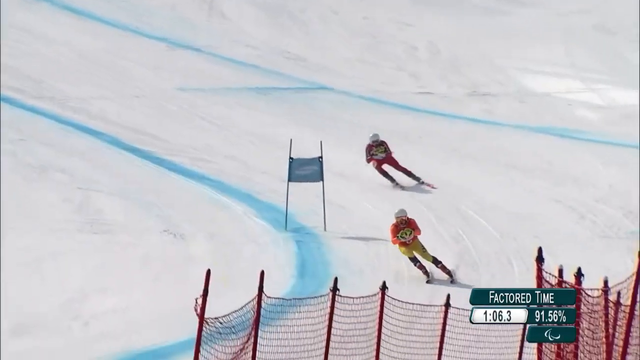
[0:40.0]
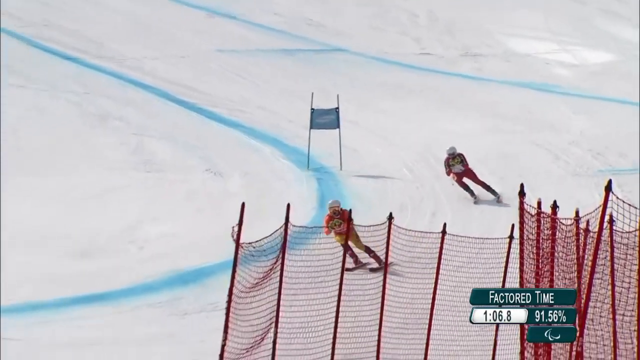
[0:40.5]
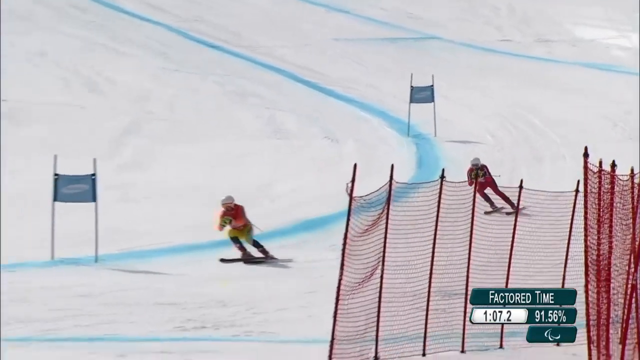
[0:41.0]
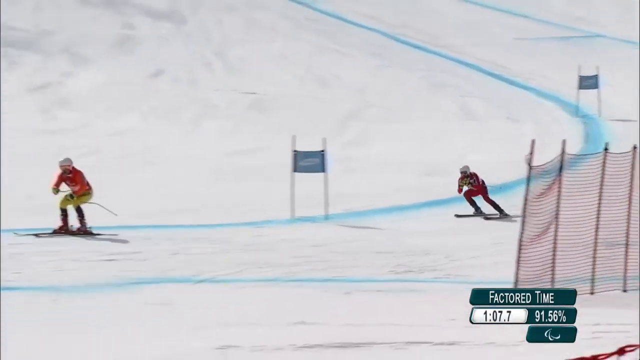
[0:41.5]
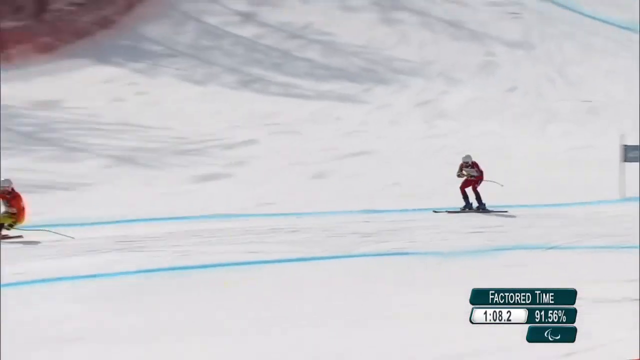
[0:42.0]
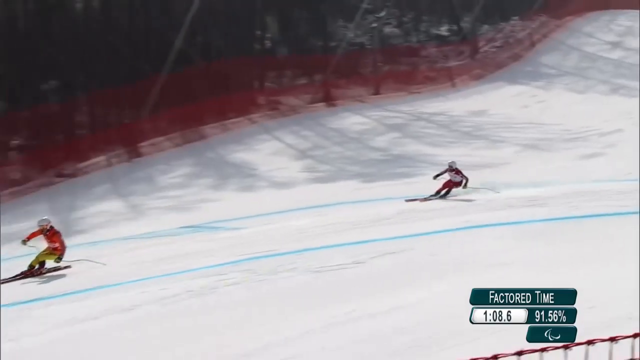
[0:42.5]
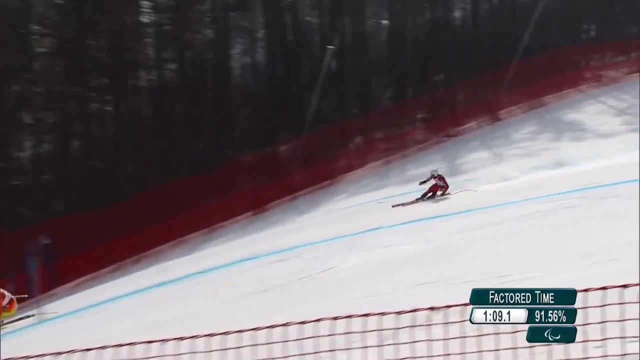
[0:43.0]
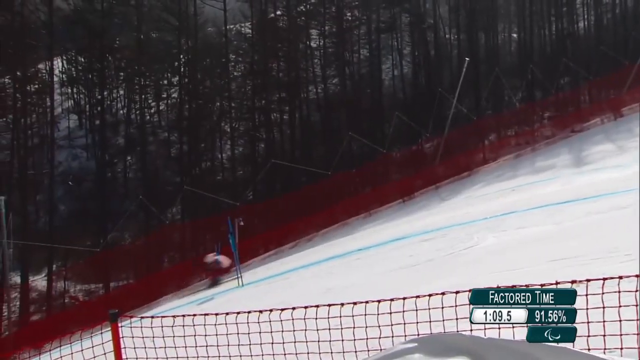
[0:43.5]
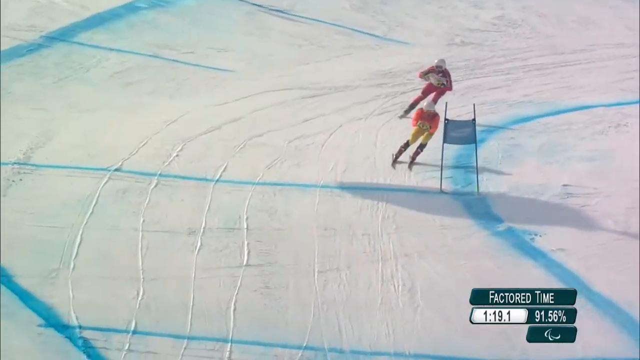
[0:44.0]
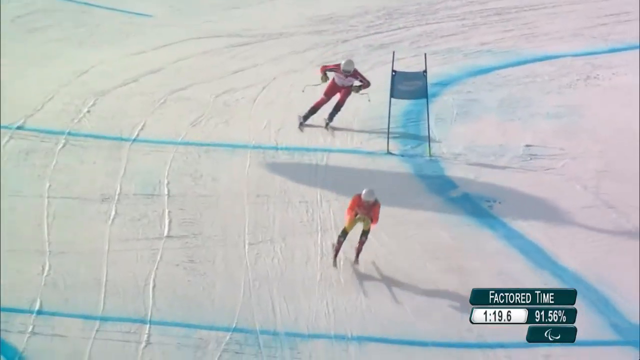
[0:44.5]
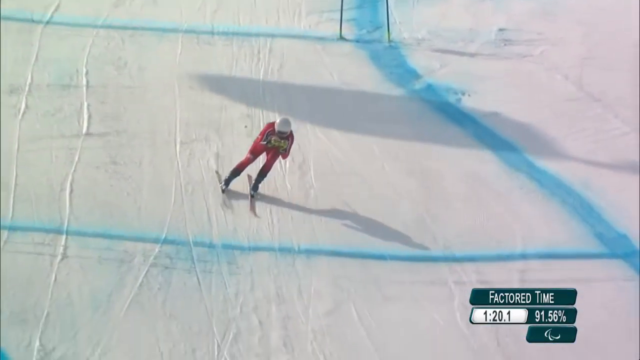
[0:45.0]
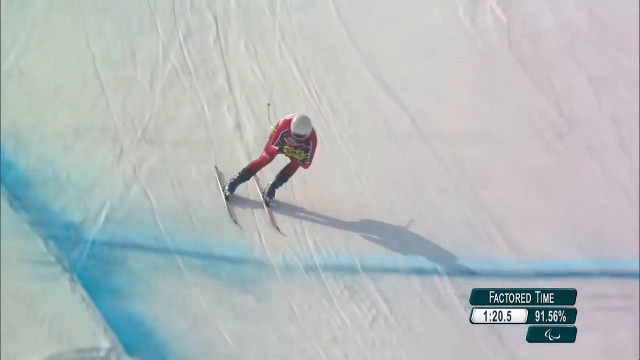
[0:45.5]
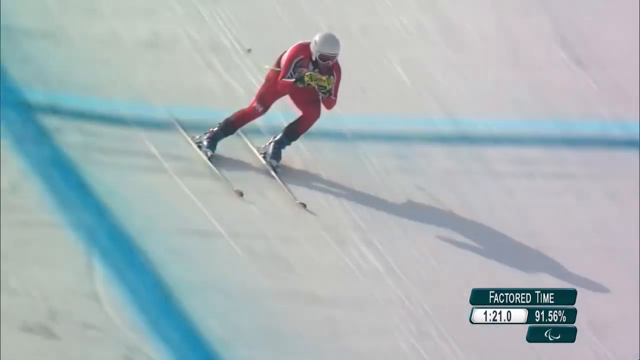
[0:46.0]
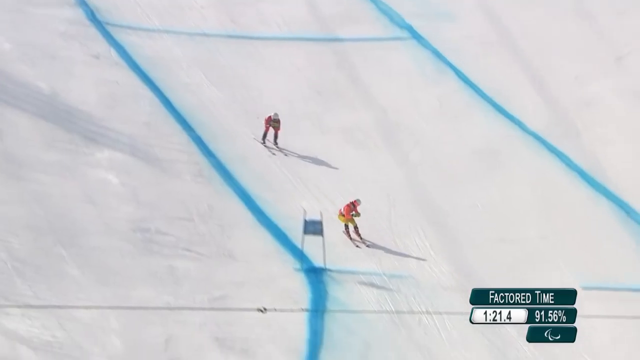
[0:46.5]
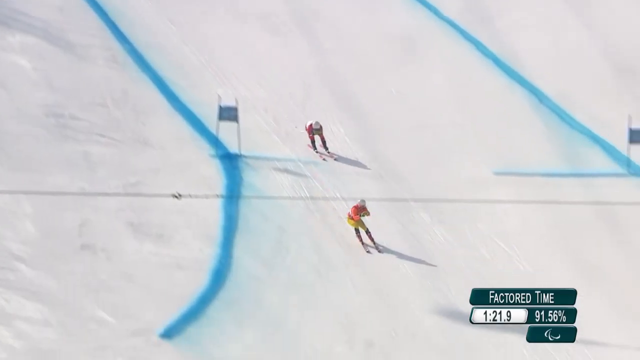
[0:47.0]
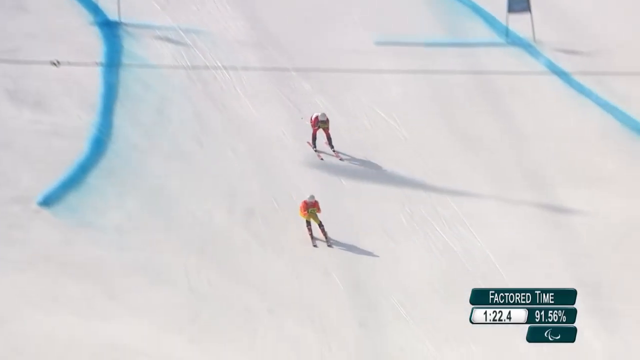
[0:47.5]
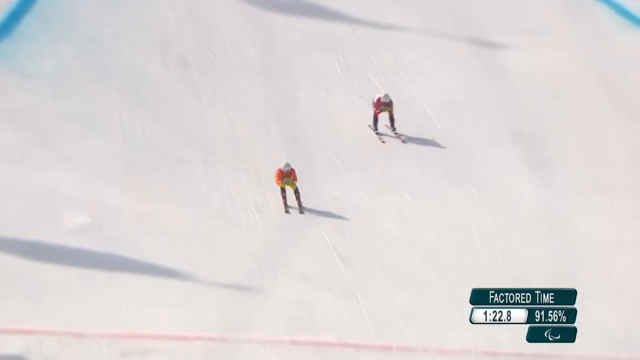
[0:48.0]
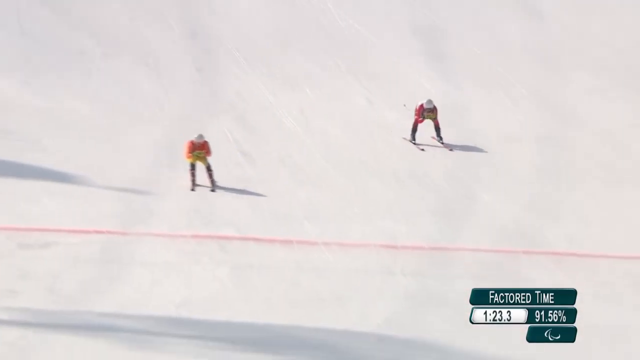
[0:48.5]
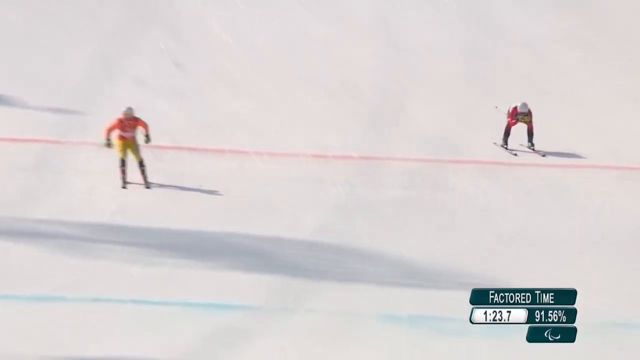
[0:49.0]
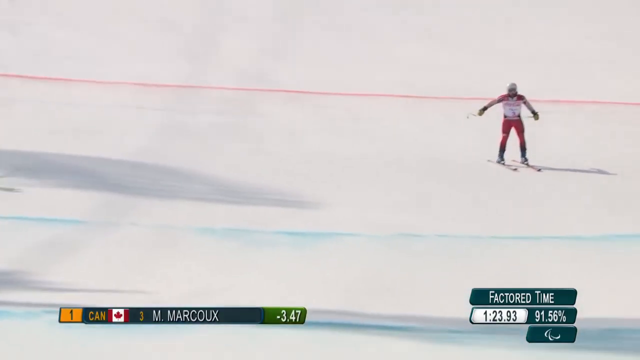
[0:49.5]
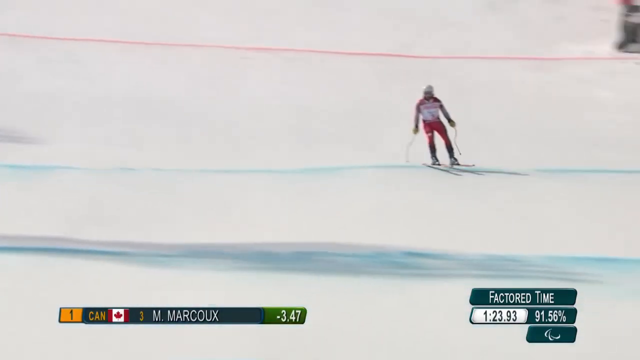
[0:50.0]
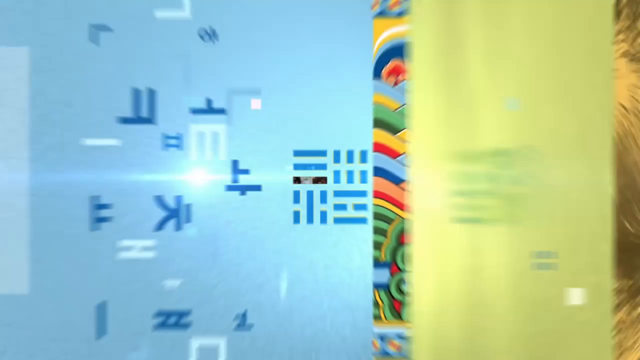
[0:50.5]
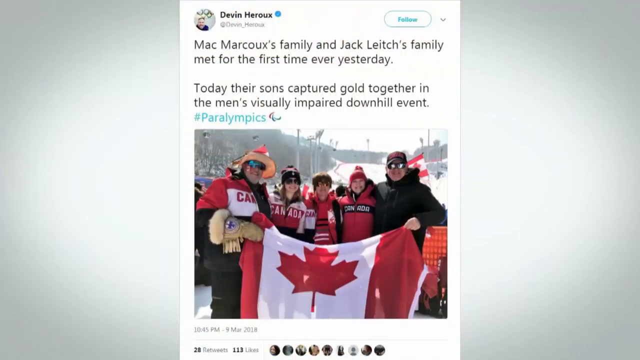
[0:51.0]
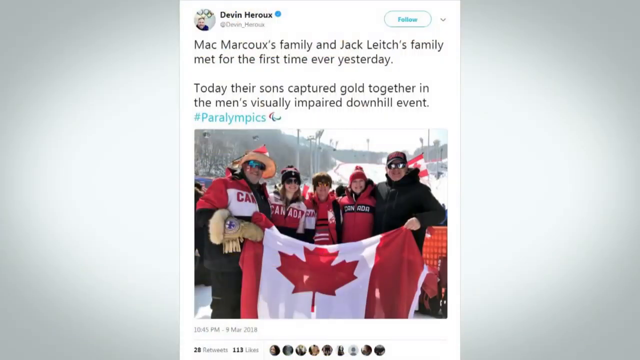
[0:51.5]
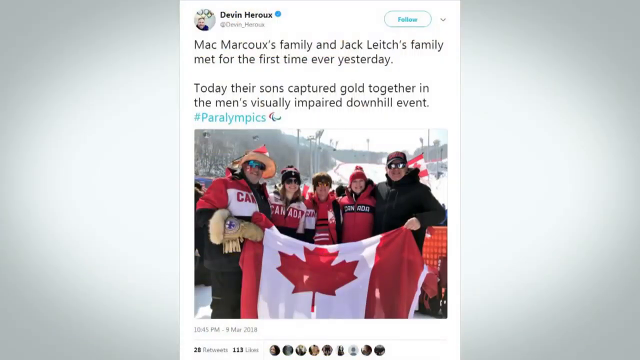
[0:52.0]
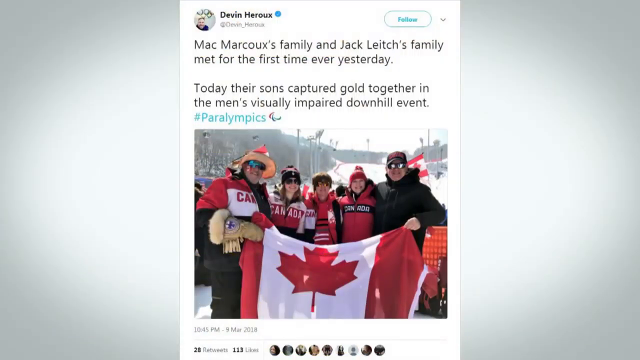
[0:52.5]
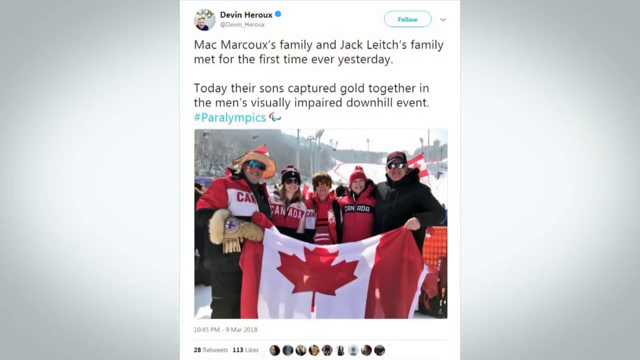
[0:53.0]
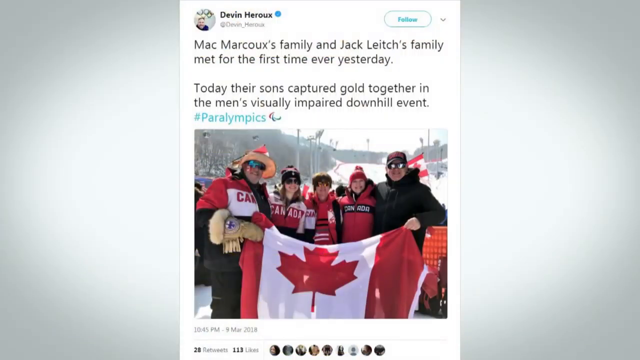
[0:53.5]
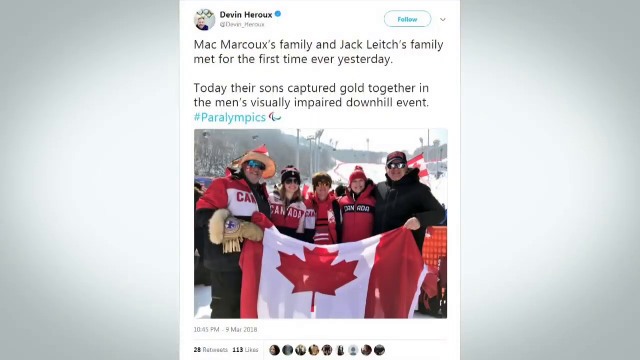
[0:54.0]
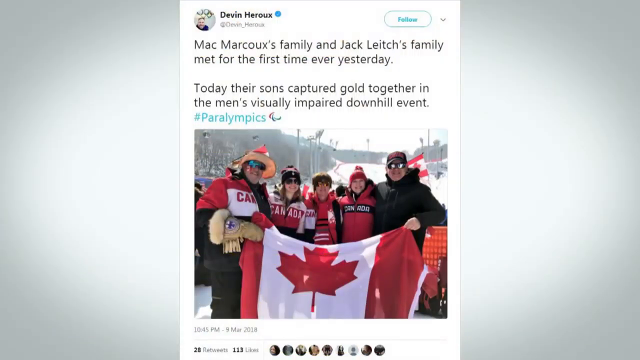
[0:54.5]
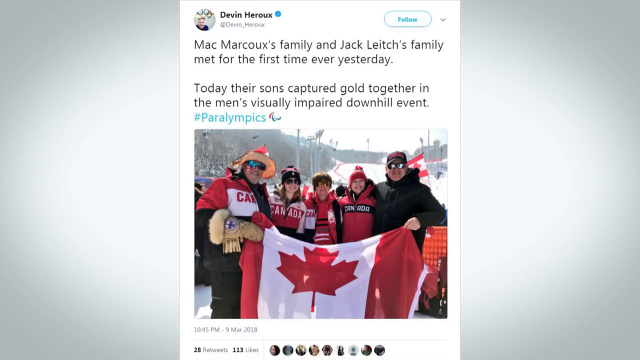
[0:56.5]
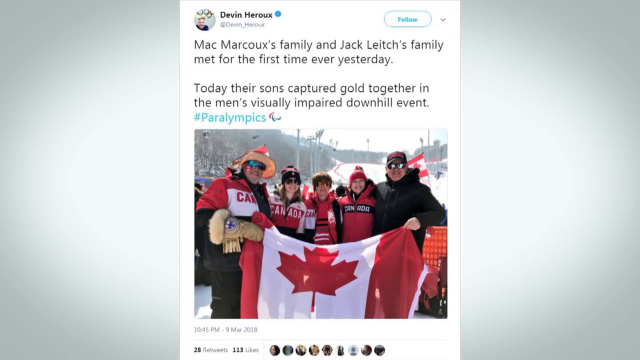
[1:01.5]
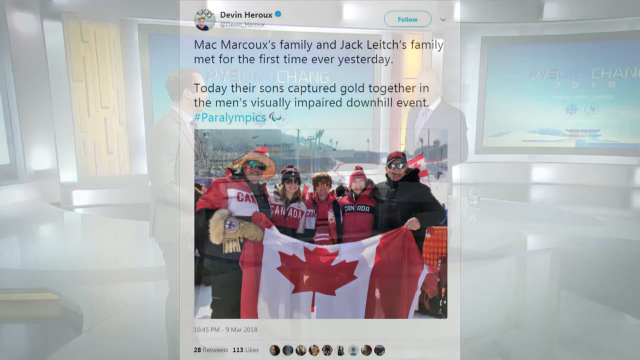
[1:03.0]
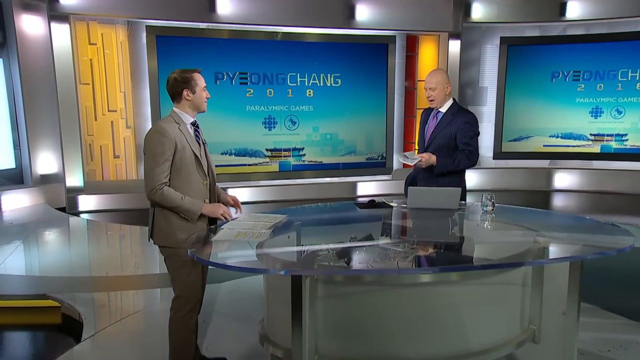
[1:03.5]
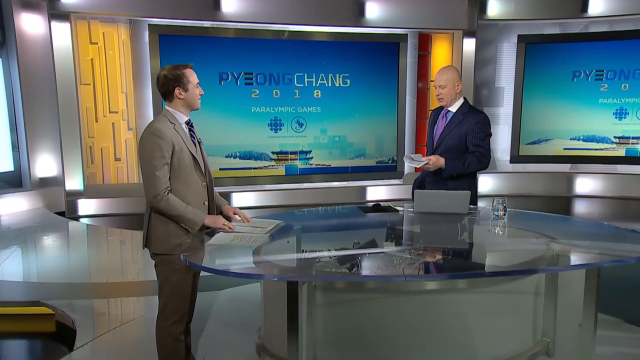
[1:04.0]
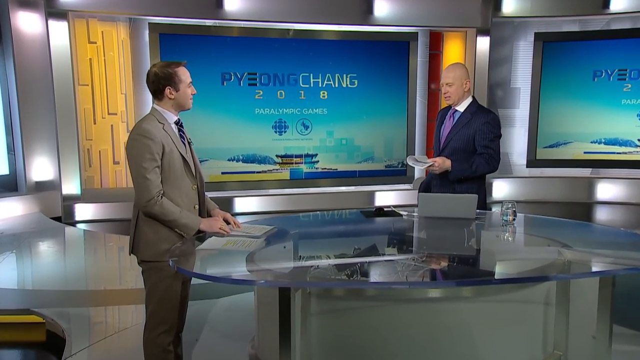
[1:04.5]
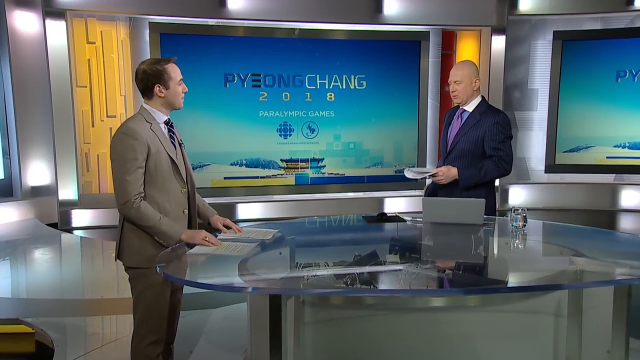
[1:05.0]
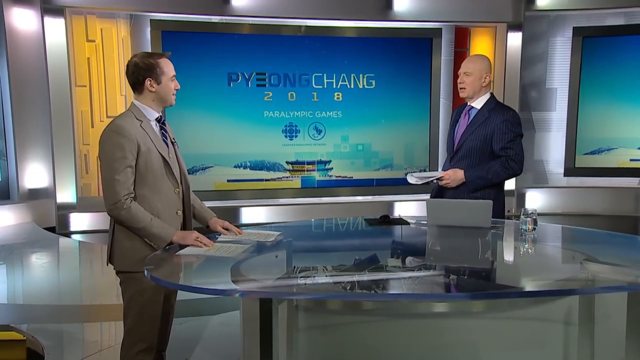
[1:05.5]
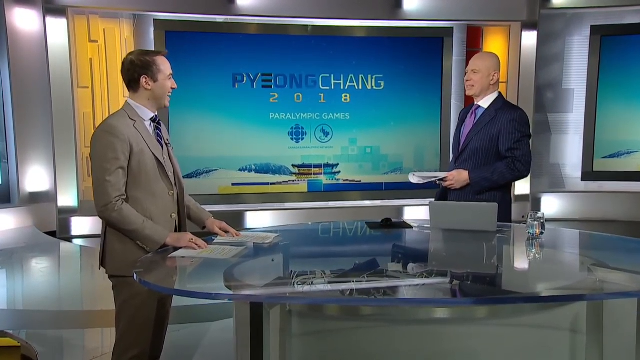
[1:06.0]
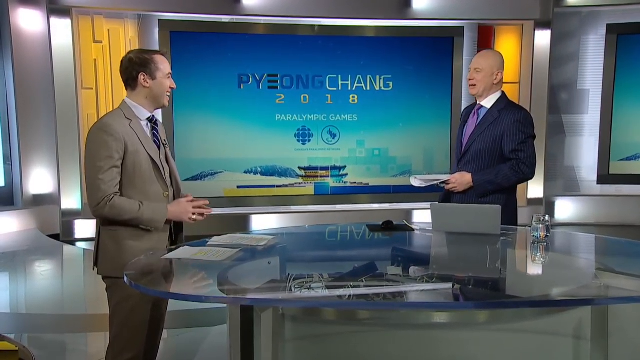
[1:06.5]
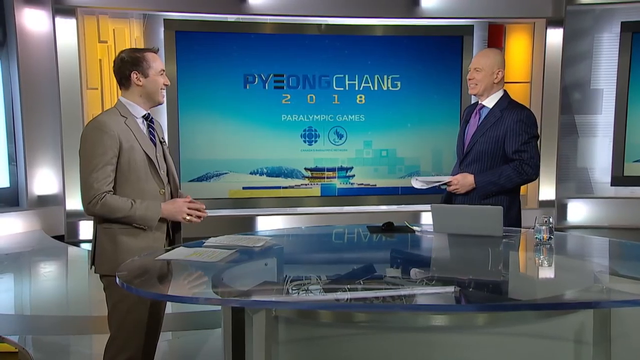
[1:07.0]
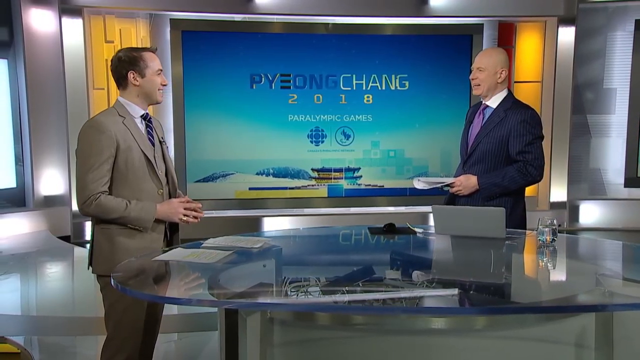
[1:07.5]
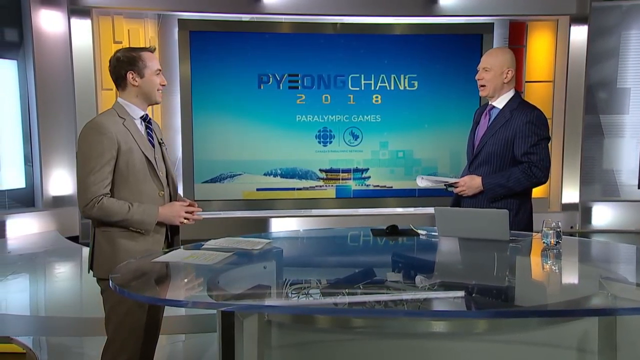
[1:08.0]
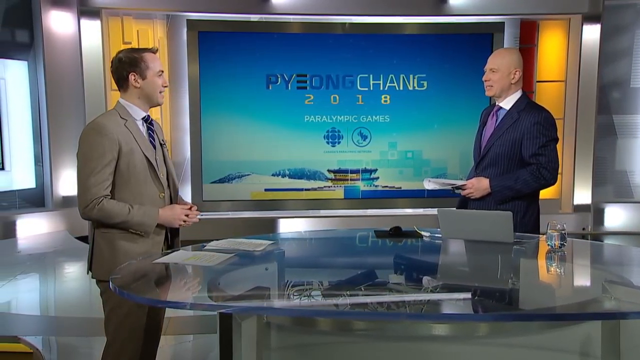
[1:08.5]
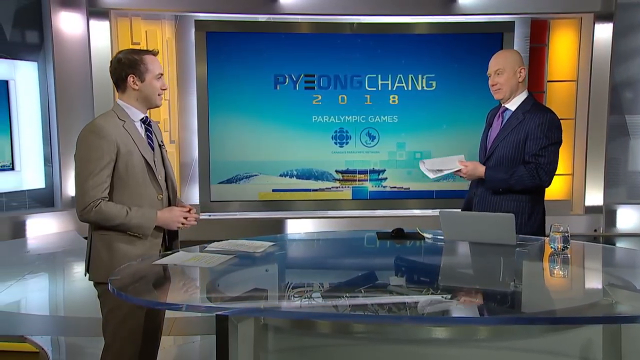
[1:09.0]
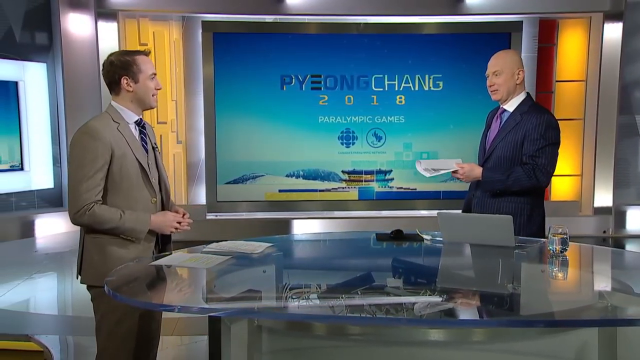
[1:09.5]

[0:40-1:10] The two skiers continue down the hill, with the one in a kind of orange and yellow suit in front, and they pick up speed. The skier in red is to the left of the other skier. They pass the finish line and both start to stop. Next comes a social media post, looking maybe like Twitter, that reads "Mac Marcuse family and Jack Leach's family met for the first time ever yesterday, today their sons captured gold together in a men's visually impaired downhill event". It shows the families holding a Canada flag, wearing lots of Canada gear and smiling at the camera, with the hashtag "#Paralympics"; it looks like someone named Devin Hero posted it. The video then fades back into the newsroom, where the brown-haired and bald-headed reporters are talking.